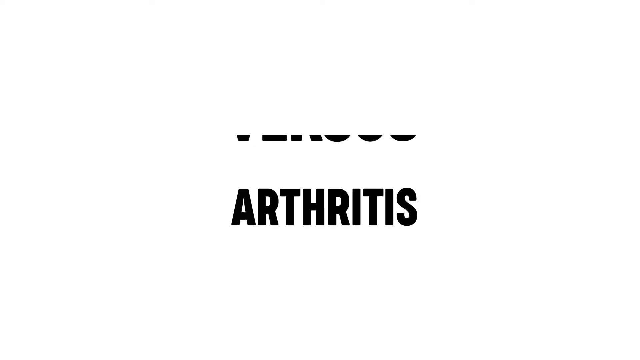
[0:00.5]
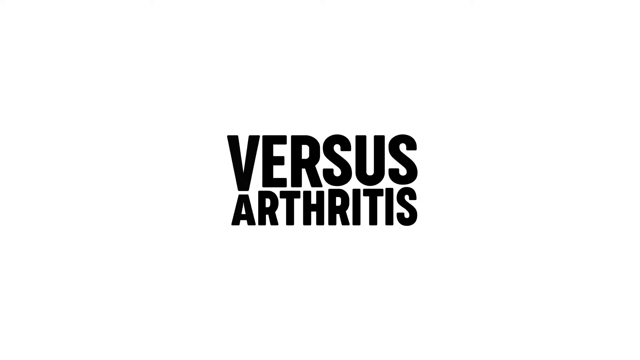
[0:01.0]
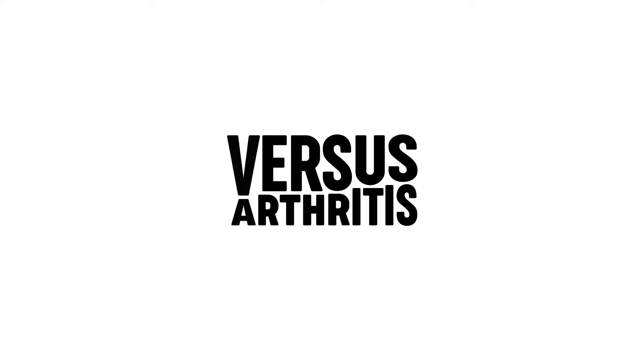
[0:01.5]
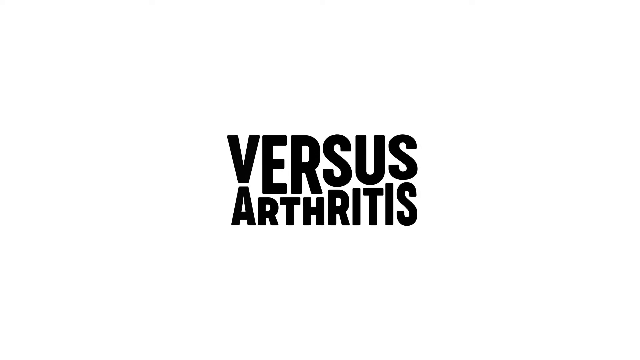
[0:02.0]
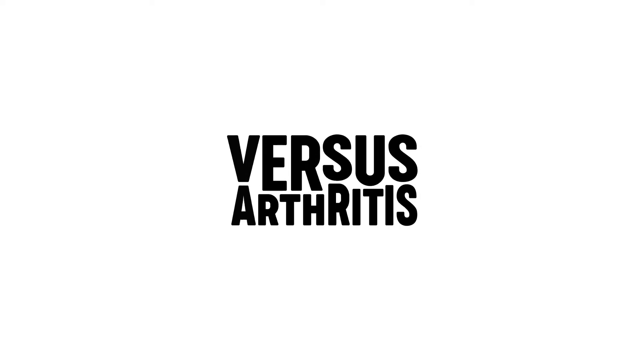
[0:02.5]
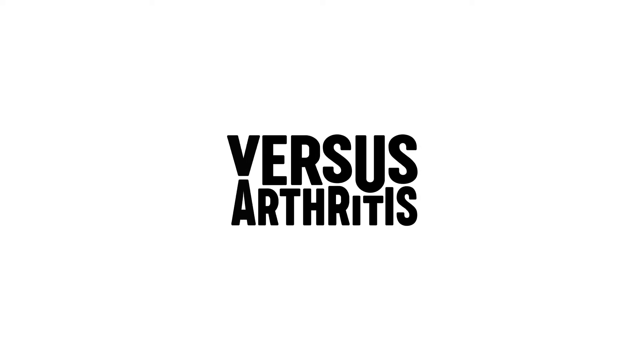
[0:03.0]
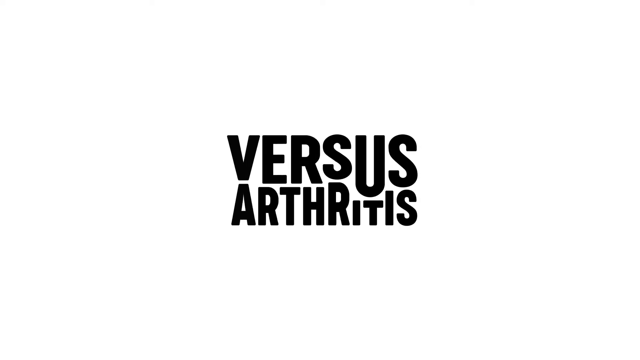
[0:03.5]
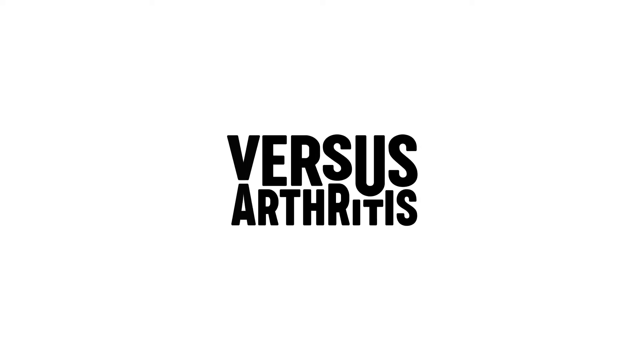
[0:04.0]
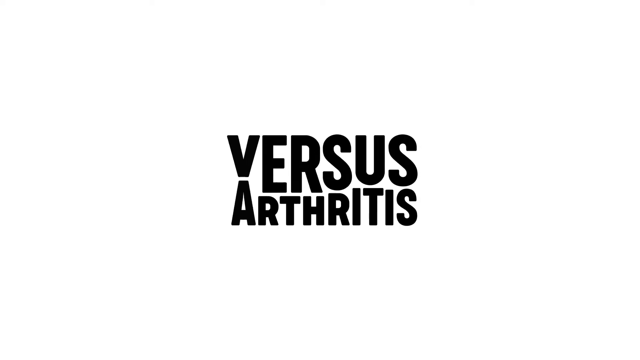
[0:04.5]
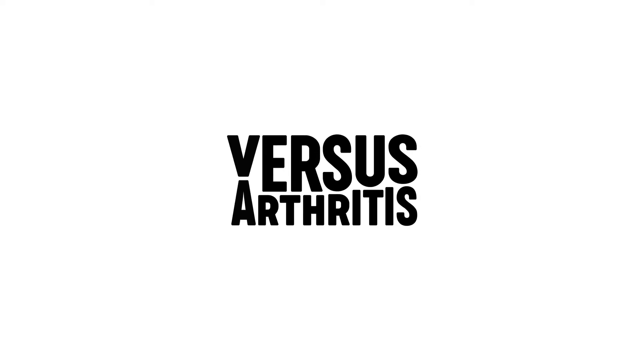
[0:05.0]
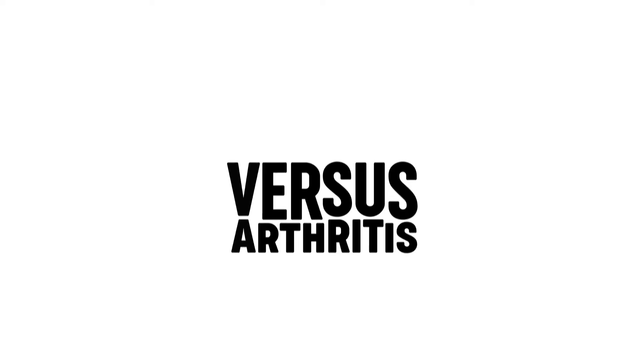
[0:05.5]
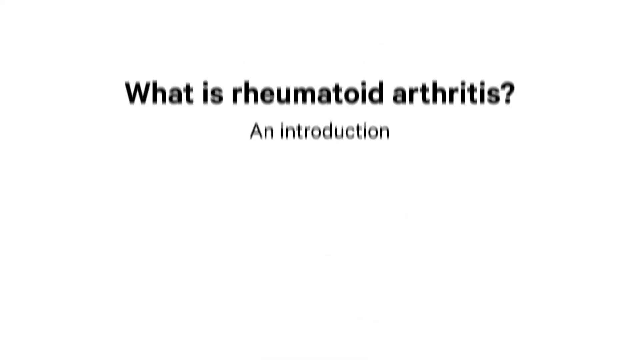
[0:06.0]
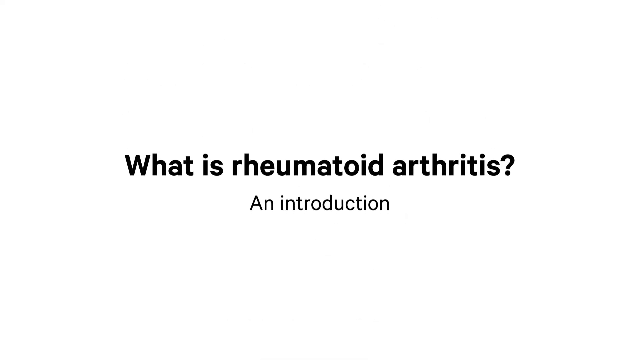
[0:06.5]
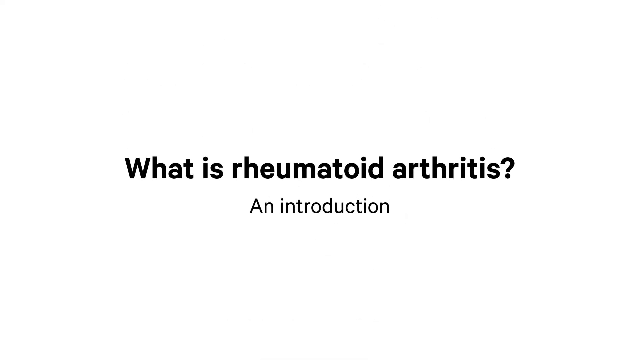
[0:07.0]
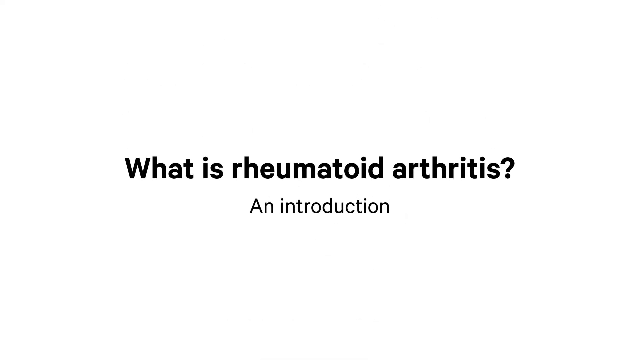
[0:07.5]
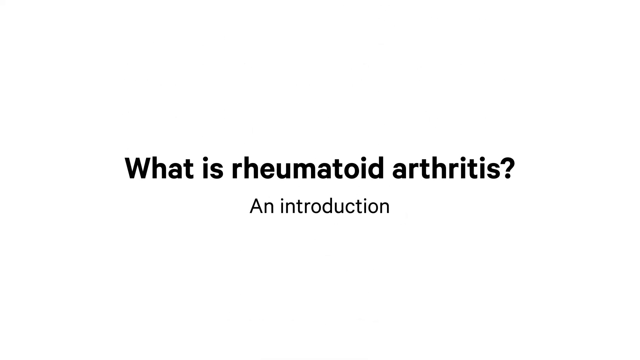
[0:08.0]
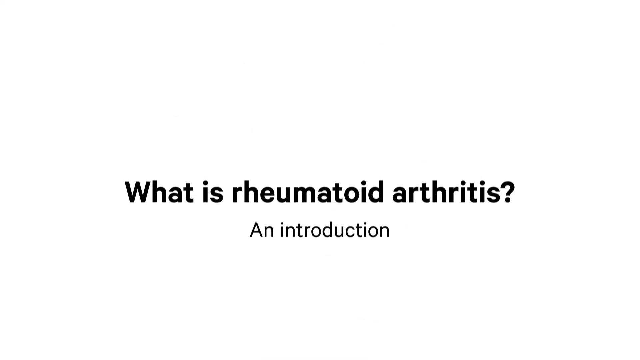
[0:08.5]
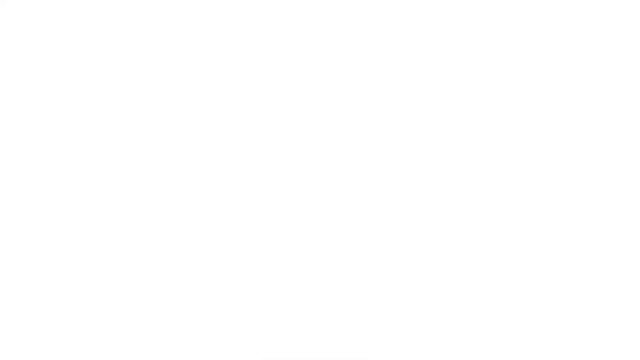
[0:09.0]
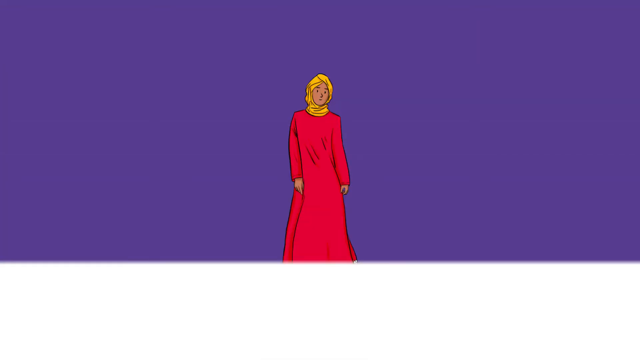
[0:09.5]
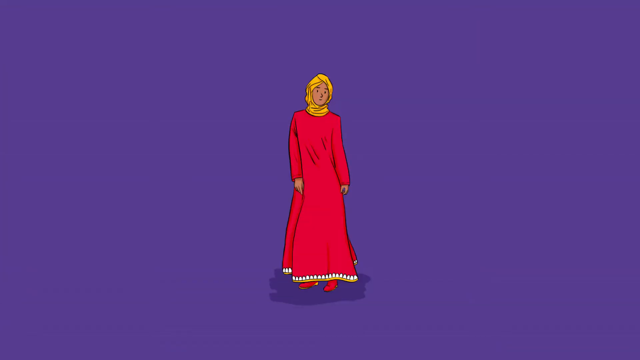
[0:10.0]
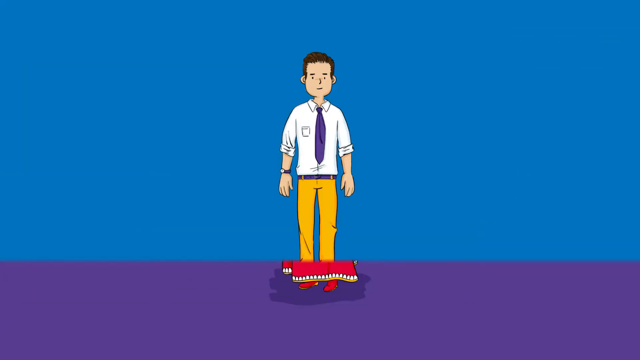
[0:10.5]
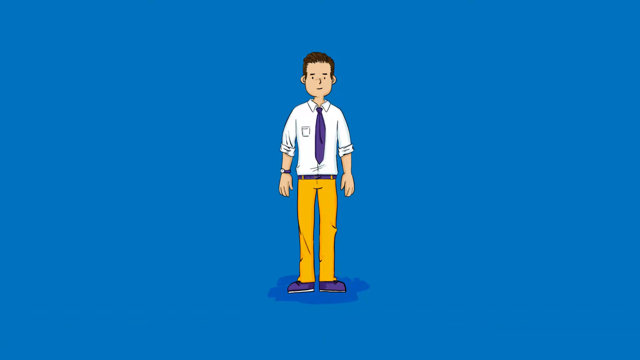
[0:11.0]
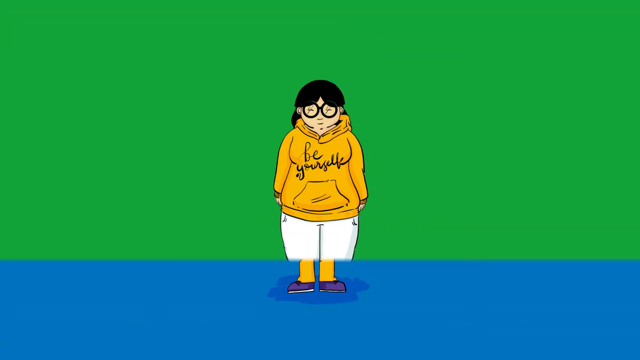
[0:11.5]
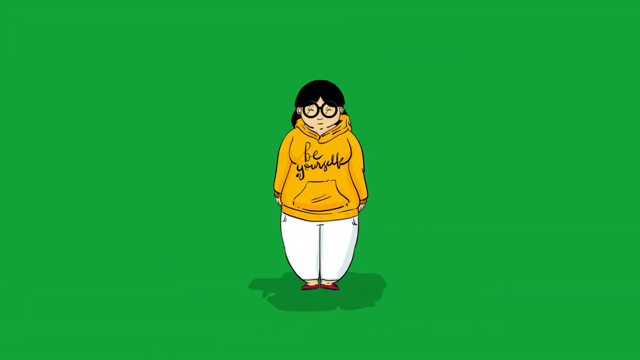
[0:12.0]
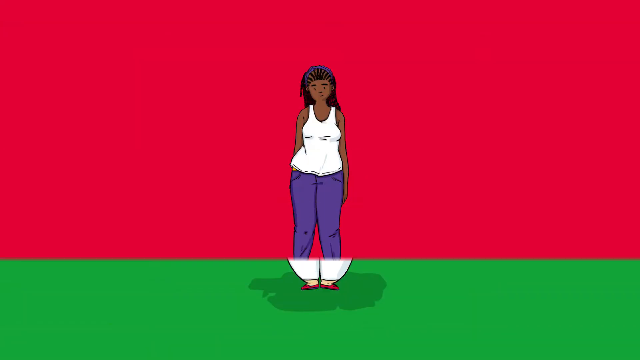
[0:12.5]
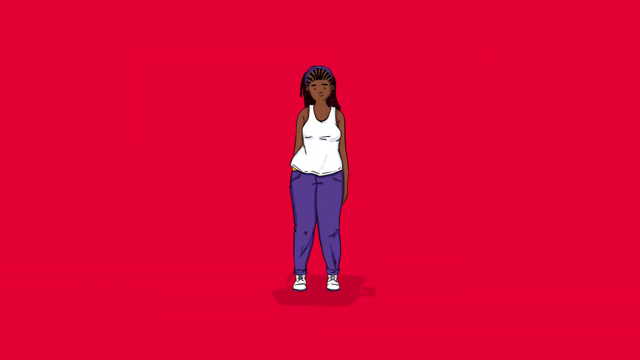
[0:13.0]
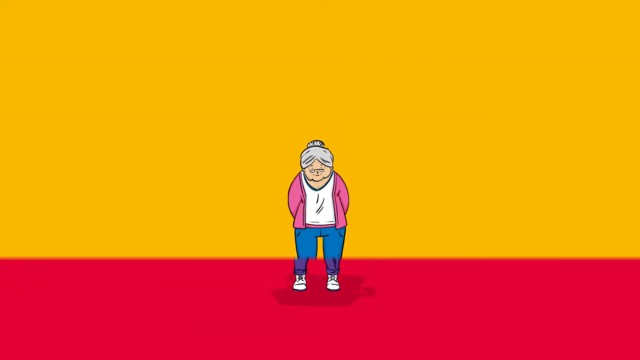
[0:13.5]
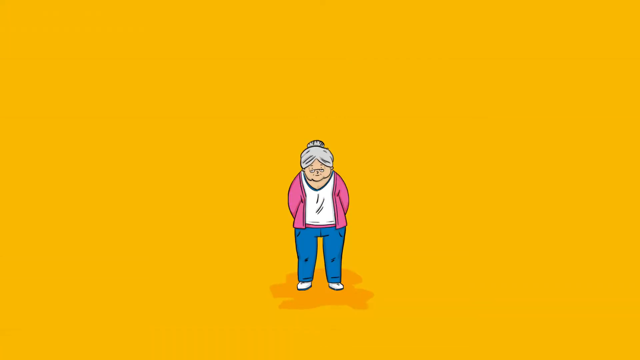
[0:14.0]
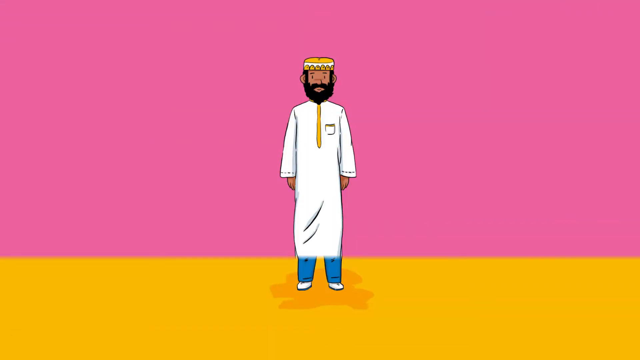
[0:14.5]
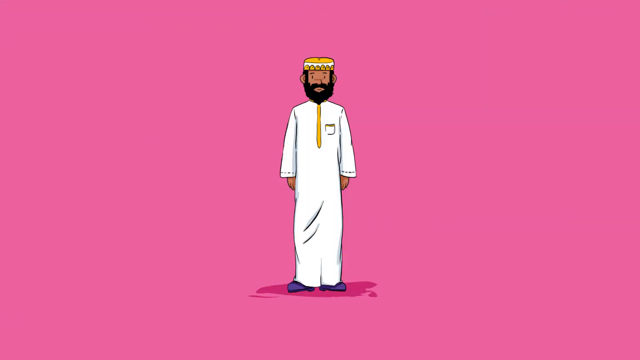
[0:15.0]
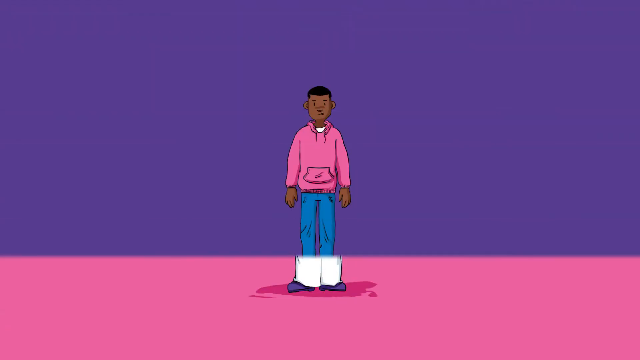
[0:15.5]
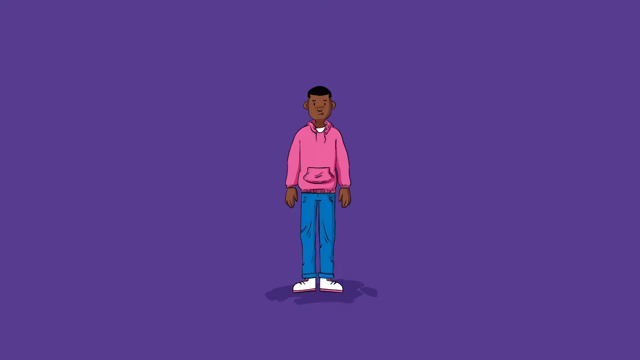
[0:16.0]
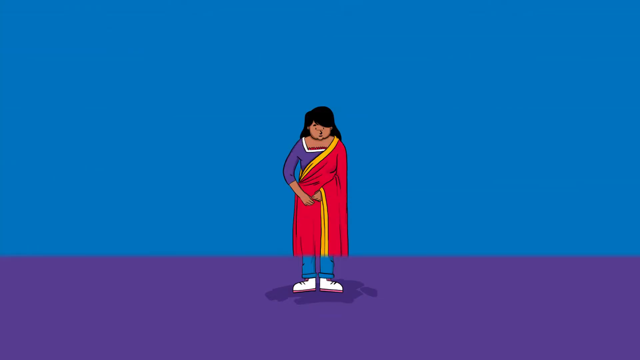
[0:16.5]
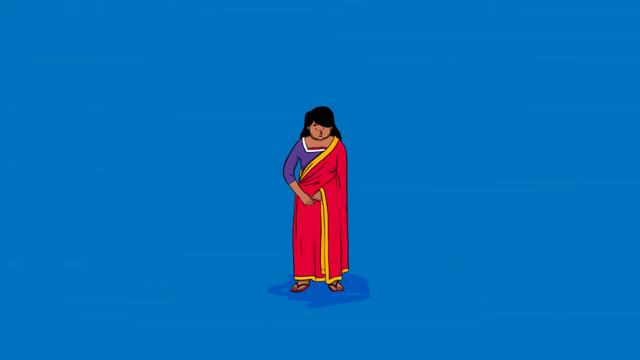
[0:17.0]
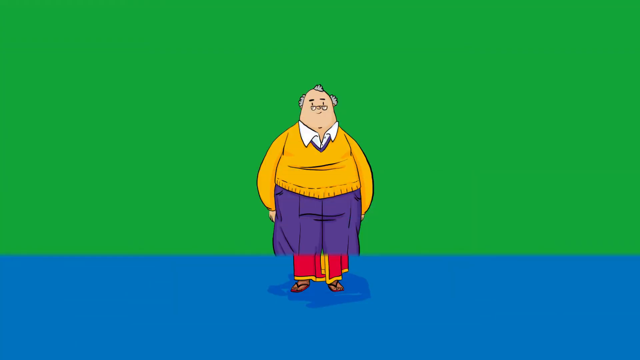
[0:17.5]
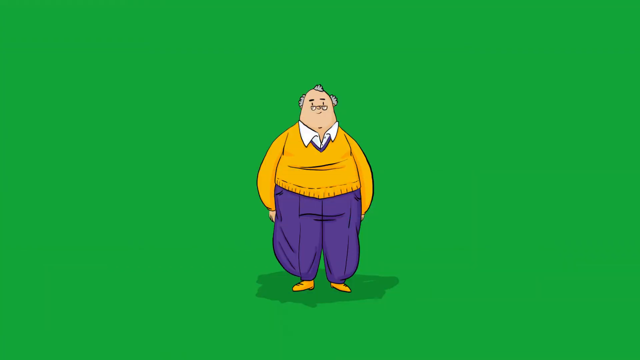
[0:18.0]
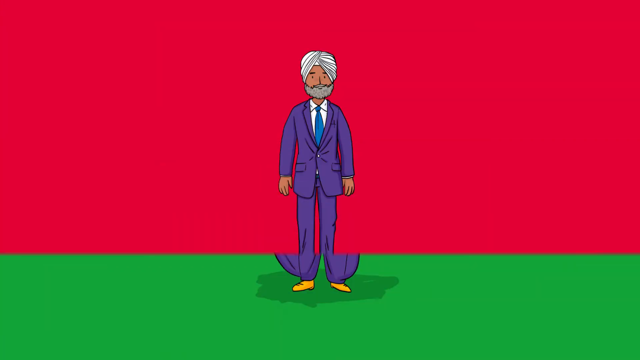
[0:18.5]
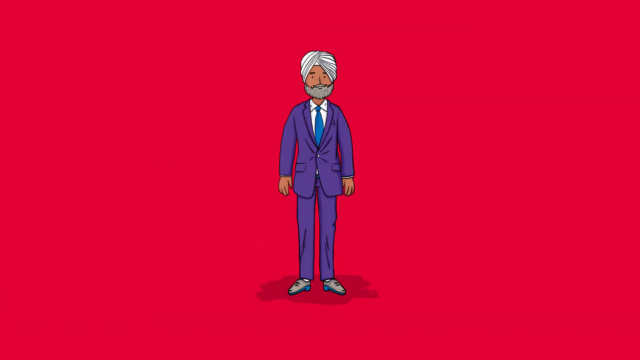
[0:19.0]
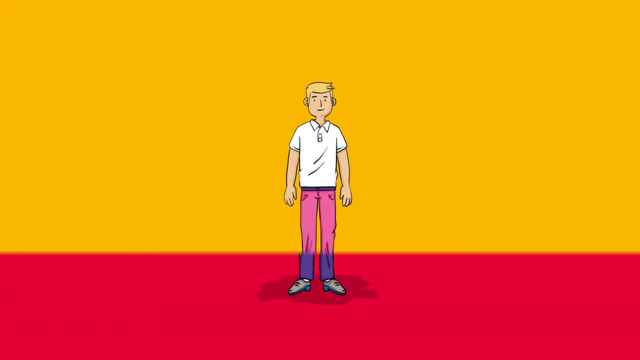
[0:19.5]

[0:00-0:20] Text on screen reads "Versus arthritis" and "what is rheumatoid arthritis?" as an introduction to the topic. An animation follows, showing someone in a red outfit, almost dress-like or robe-like, with a yellow head covering. A male appears wearing yellow pants, a white shirt and a blue-purple tie, and a little girl has black hair, black-rimmed sunglasses and a yellow outfit. The people come in different sizes and shapes, with white pants and flats also shown. A Black lady wears a white top and purple pants, and an elderly lady wears a pink jacket, a white shirt and blue pants. The opening flashes through people of different shapes, sizes, colors and races, seemingly conveying that anyone can get rheumatoid arthritis.